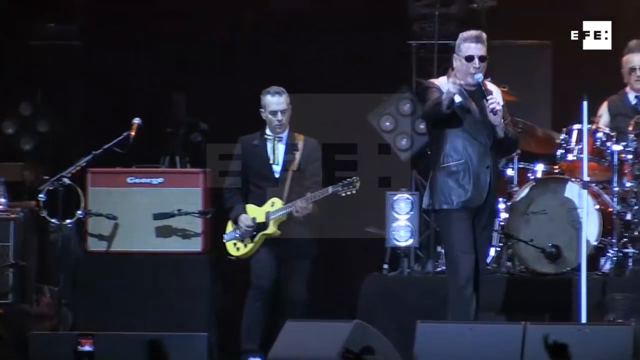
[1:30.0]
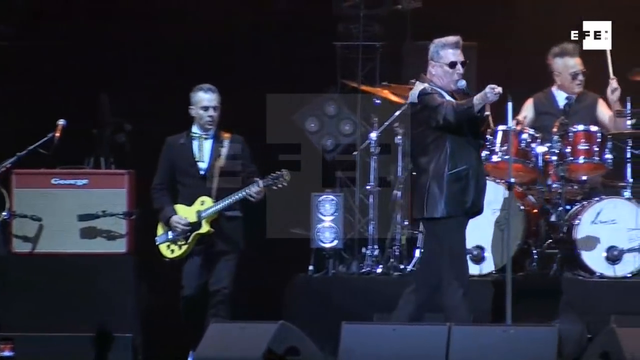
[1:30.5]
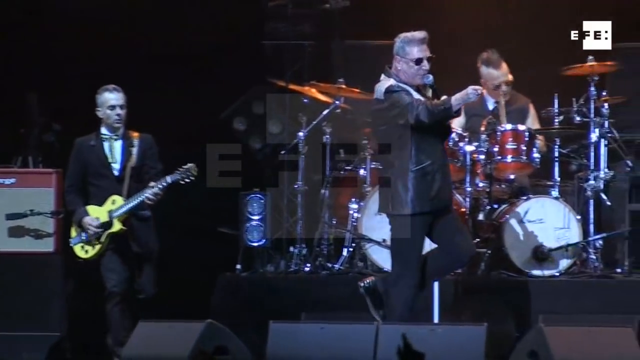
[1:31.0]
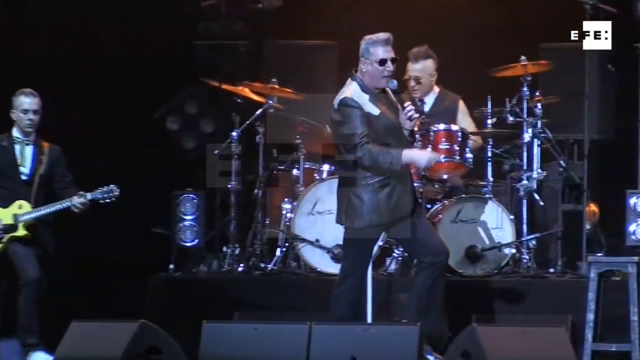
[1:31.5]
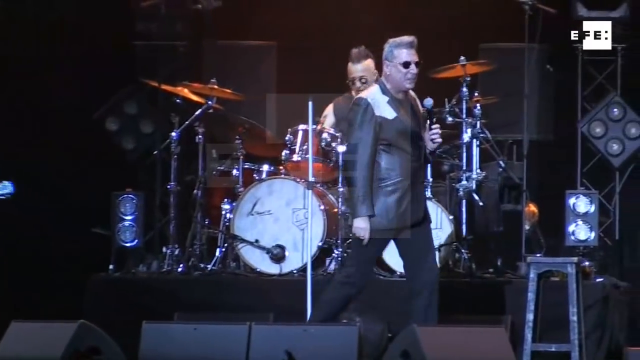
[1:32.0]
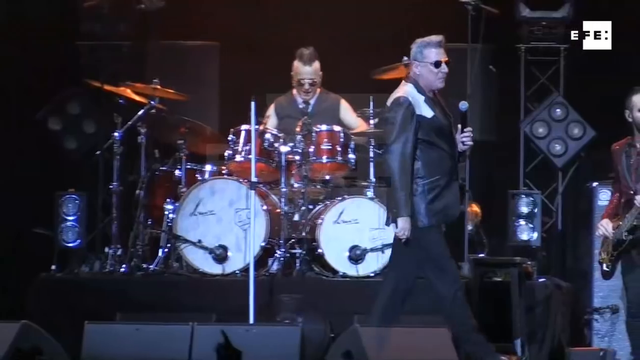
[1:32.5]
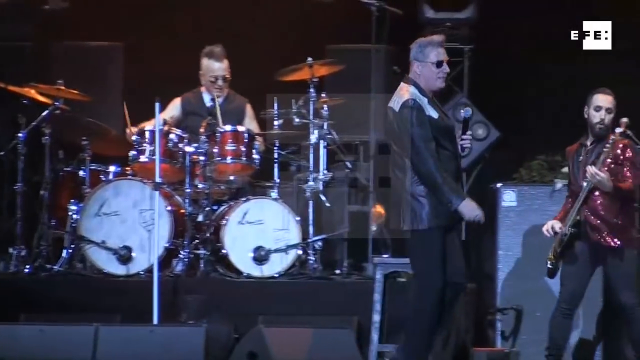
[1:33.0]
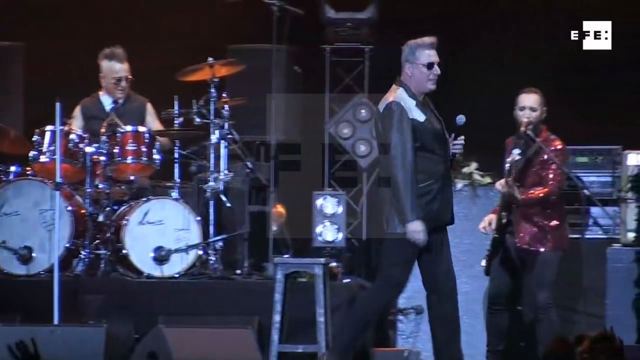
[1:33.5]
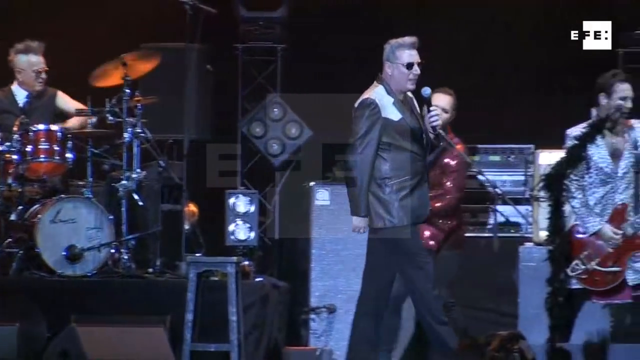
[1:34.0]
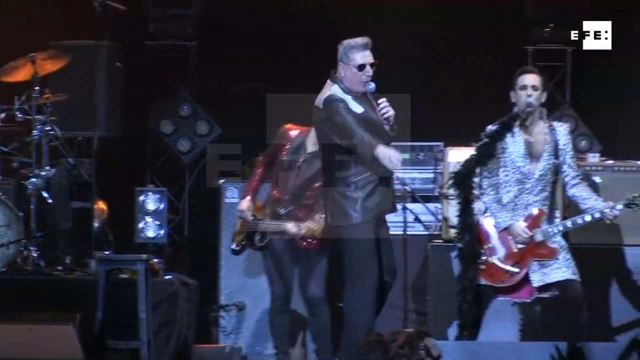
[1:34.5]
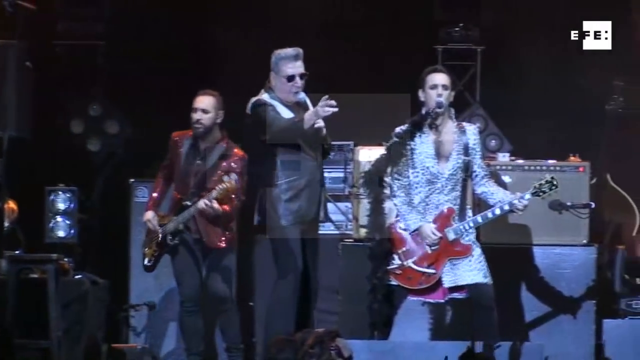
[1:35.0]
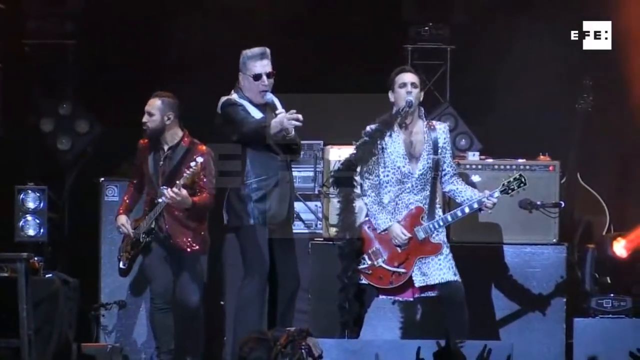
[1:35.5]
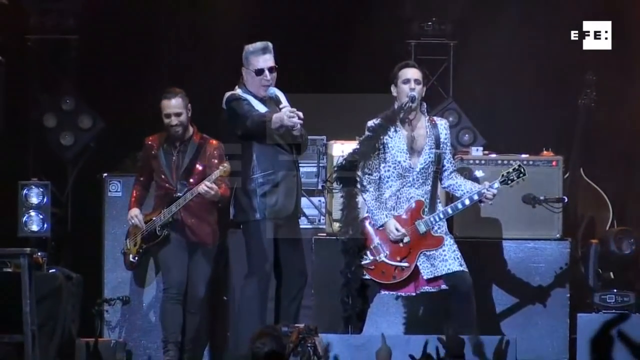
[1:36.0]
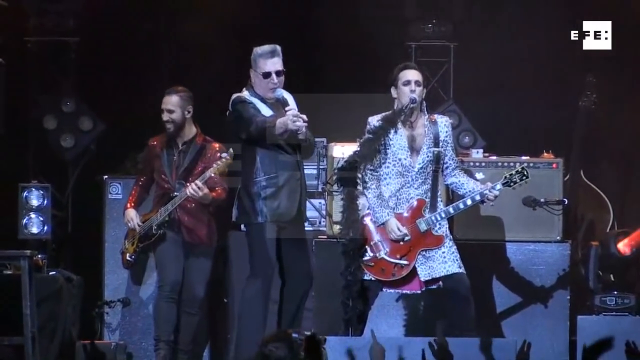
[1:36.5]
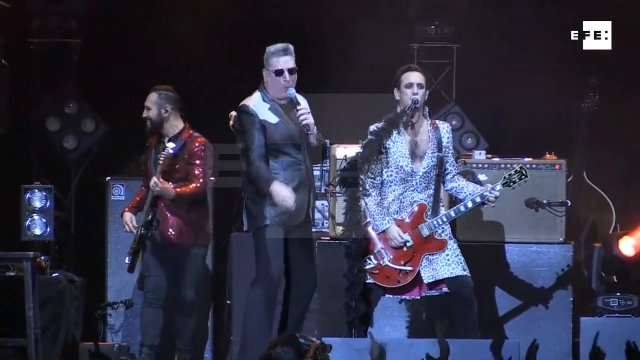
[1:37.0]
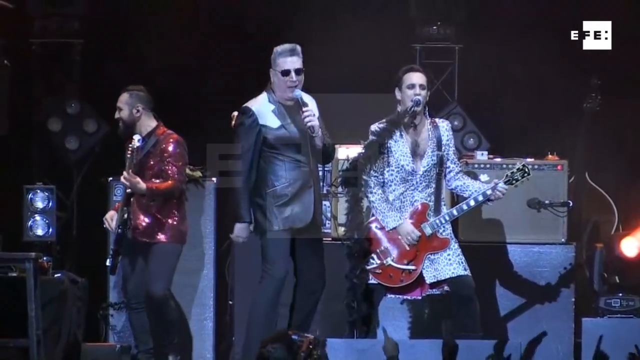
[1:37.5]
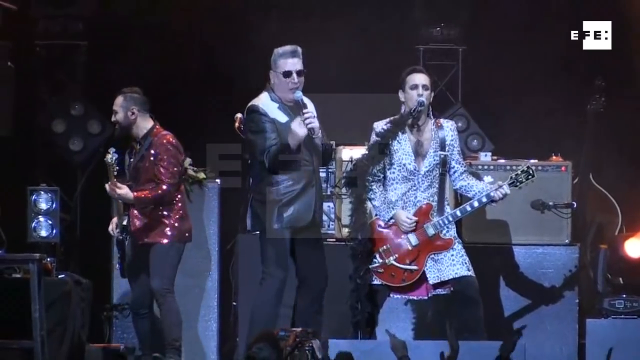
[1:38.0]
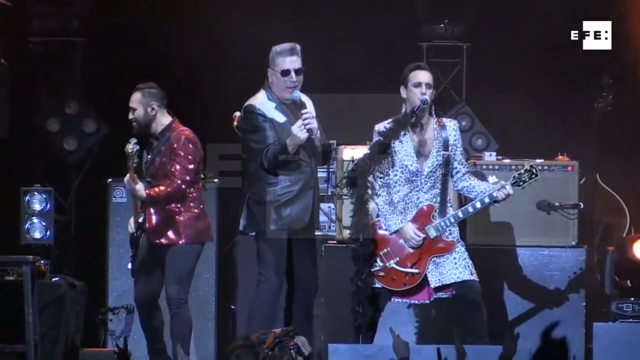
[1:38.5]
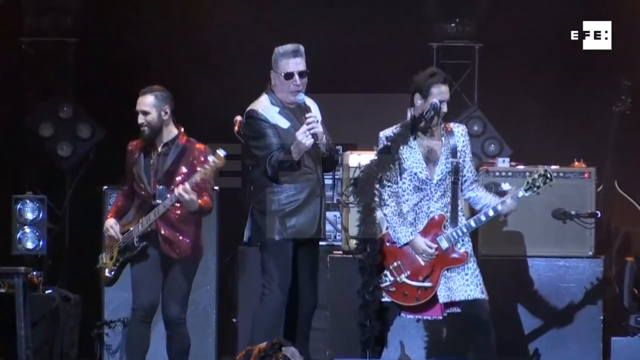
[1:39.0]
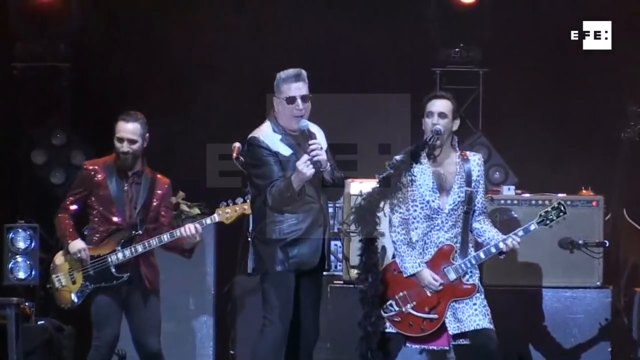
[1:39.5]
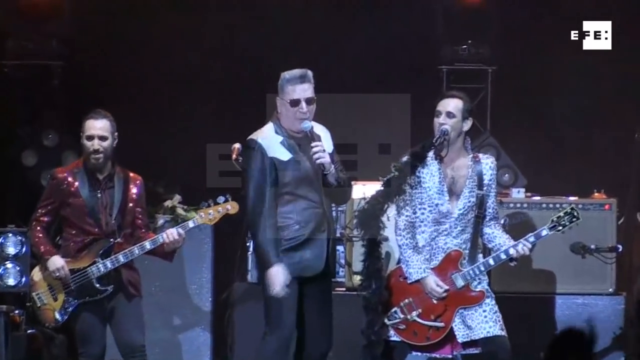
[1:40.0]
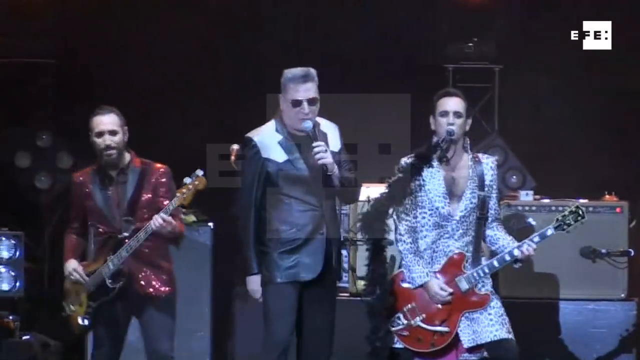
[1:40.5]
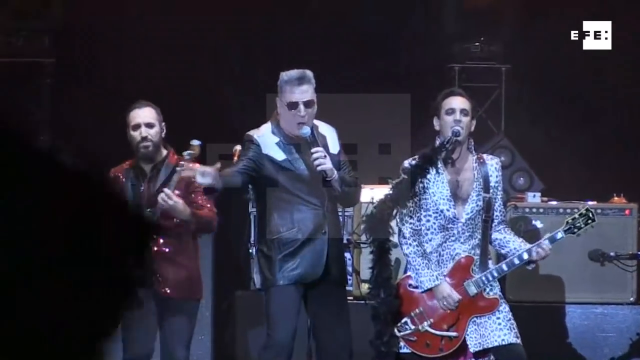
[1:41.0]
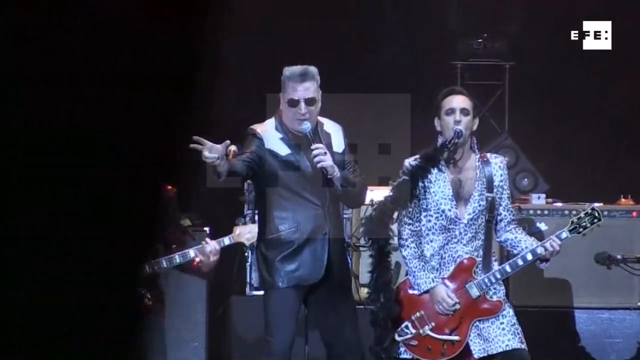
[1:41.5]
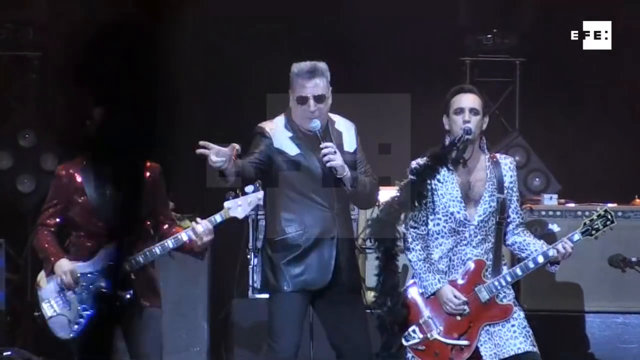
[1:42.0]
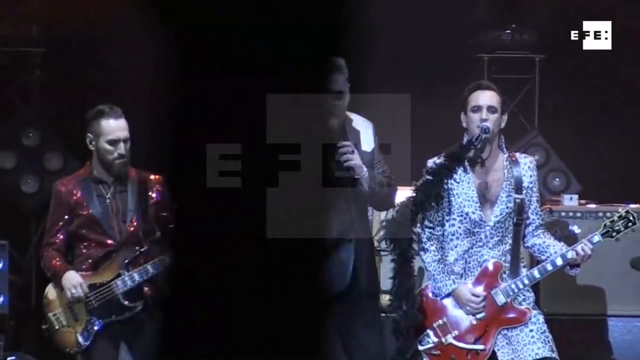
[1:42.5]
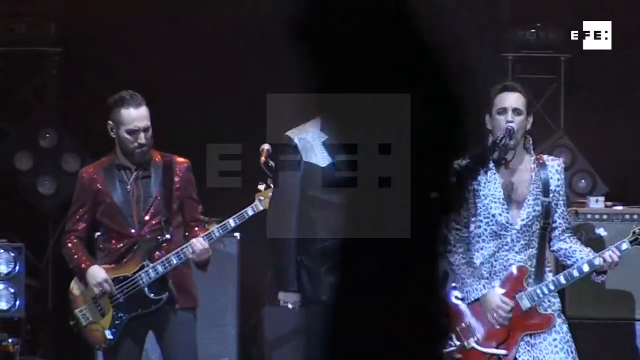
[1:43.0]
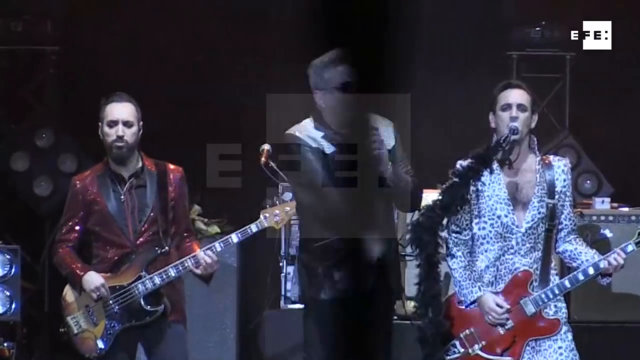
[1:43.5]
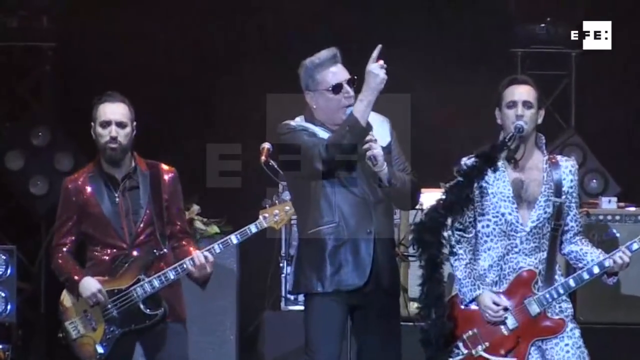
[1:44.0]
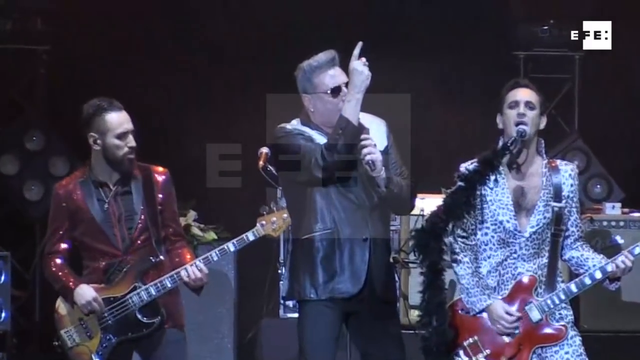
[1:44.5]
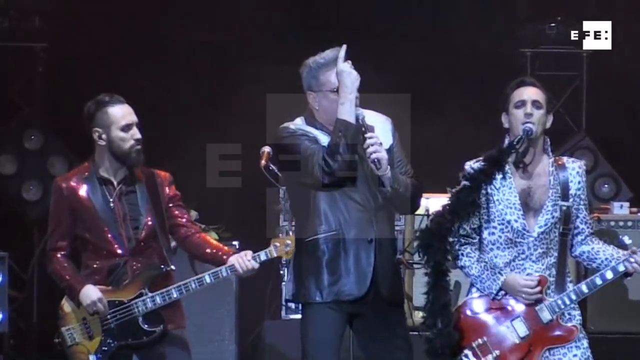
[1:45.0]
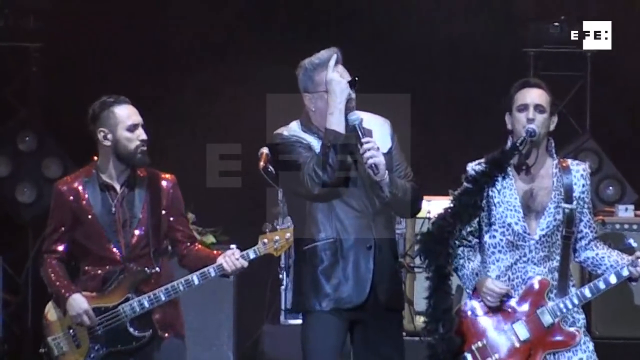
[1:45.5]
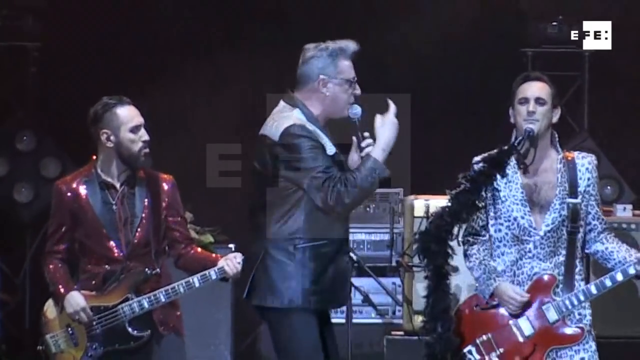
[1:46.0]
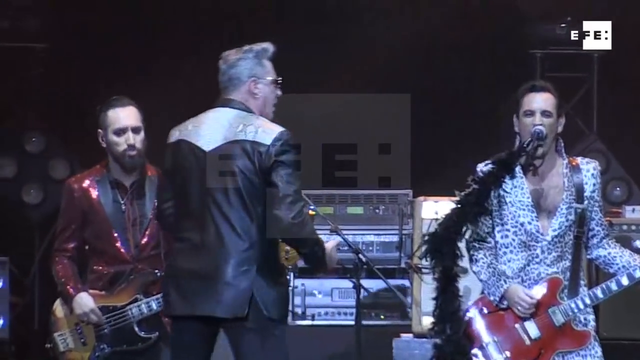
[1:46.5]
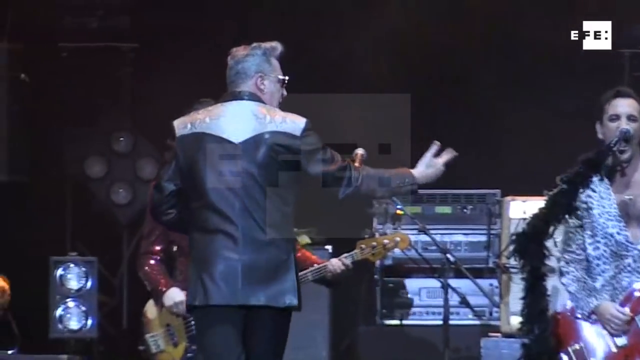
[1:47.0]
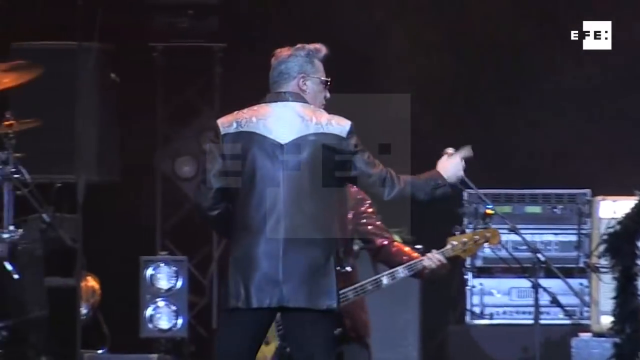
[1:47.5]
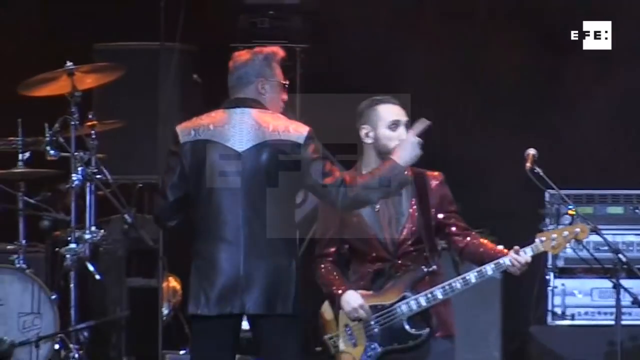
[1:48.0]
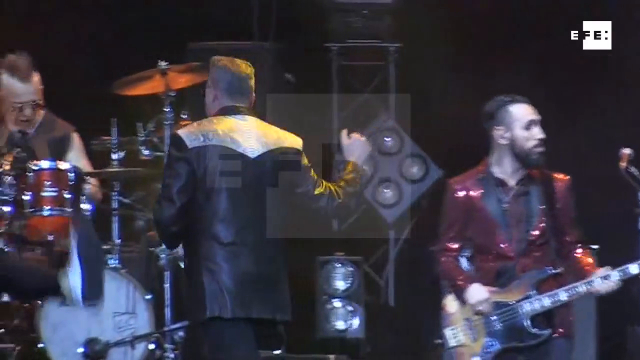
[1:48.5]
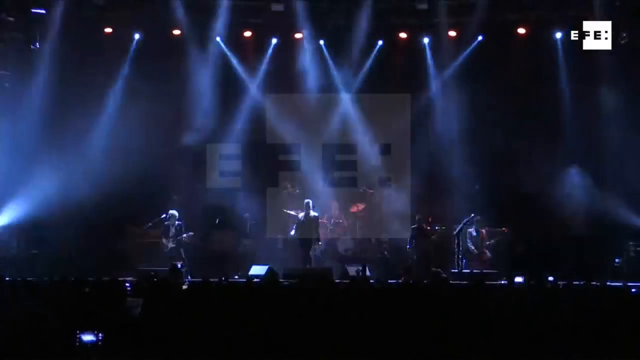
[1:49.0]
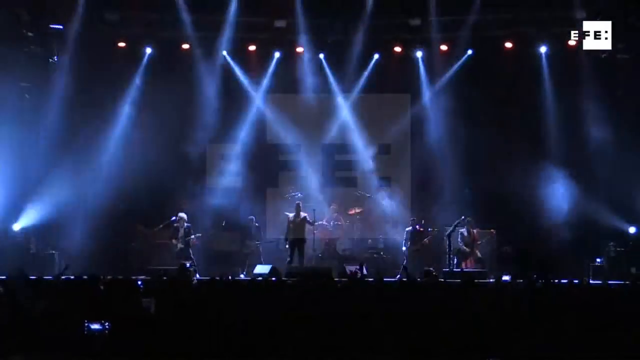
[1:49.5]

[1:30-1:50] In the middle of the stage is a small black platform with a red drum set on it; the bass drum heads are white. The drummer wears a white button-up collared shirt with a black vest over it and black sunglasses, and has a spiked mohawk with no hair on the sides of his head, just the very top spiked up. In front of him the singer walks back and forth to the left and right. He wears a black leather suit jacket with white over the shoulders, which look like white shoulder pads, black pants and black sunglasses, and his hair is also spiked up. When he walks to the right, a man in a black suit jacket, white button-up shirt and black pants is shown holding and playing a yellow guitar. The singer then turns and walks to his left, revealing a man holding a brown bass guitar, wearing a sparkly ruby dark red suit jacket and black pants, with black amplifiers behind him. The singer then stops beside another person playing a red guitar, who wears a long white suit jacket that looks like a trench coat with black spots and sings into a microphone. Gray and black amps are set on the stage behind him.